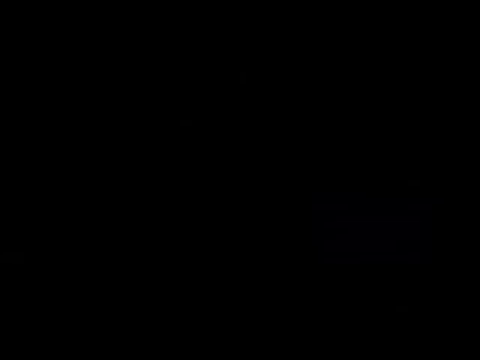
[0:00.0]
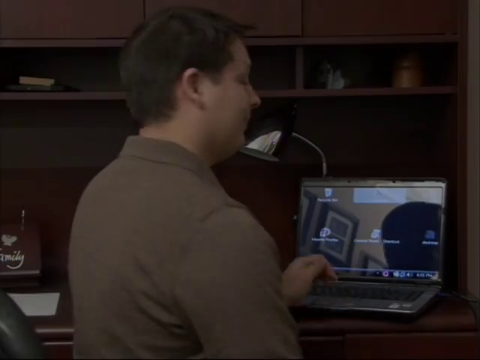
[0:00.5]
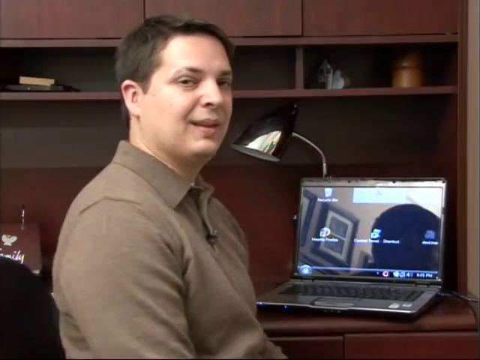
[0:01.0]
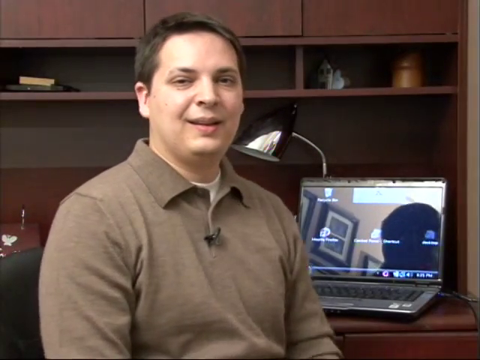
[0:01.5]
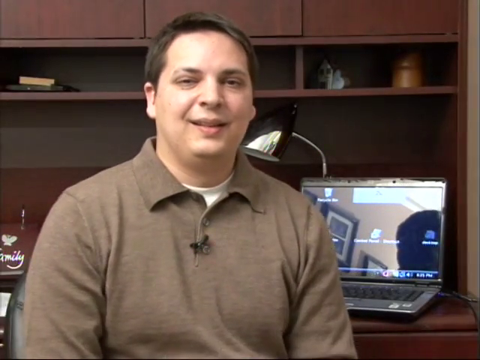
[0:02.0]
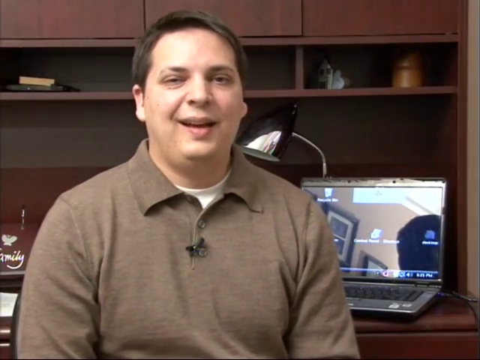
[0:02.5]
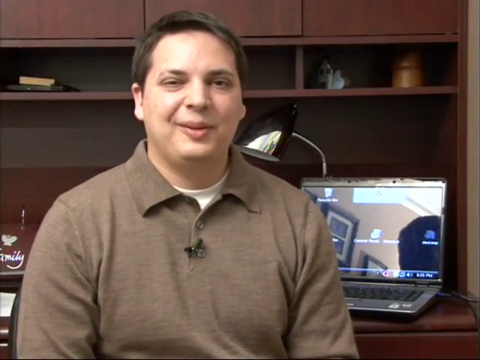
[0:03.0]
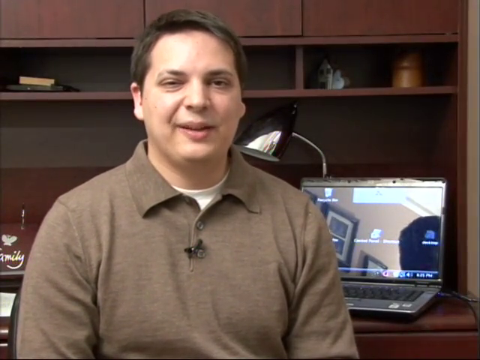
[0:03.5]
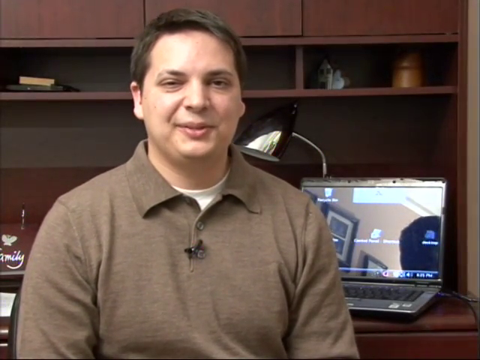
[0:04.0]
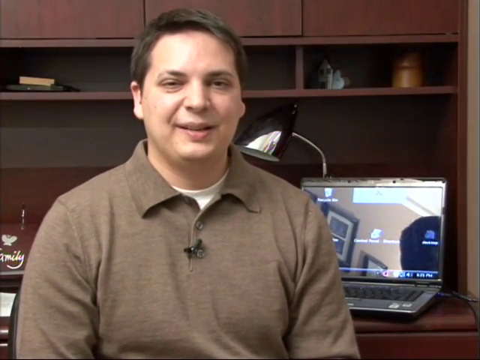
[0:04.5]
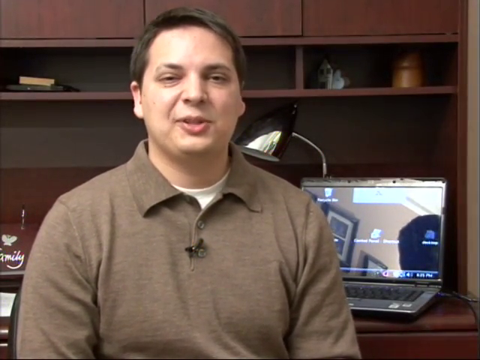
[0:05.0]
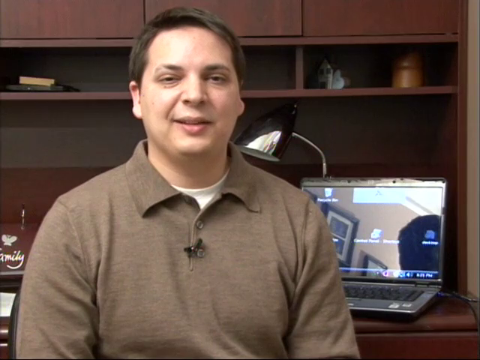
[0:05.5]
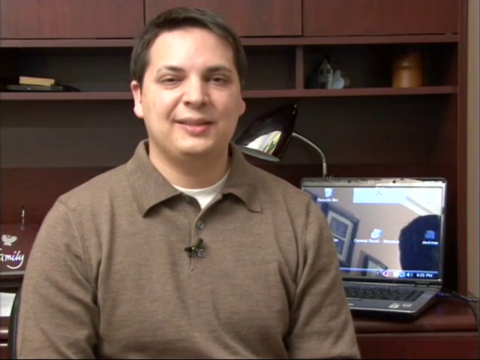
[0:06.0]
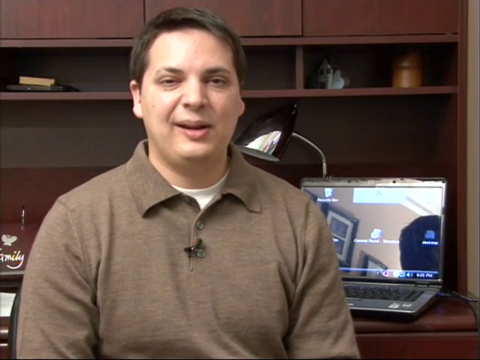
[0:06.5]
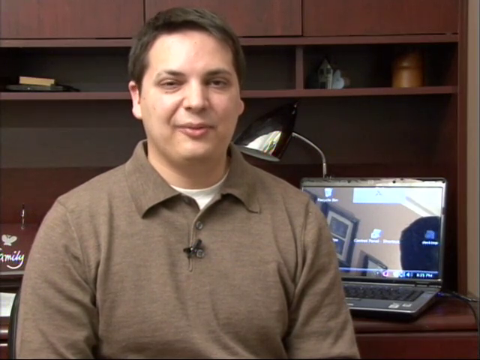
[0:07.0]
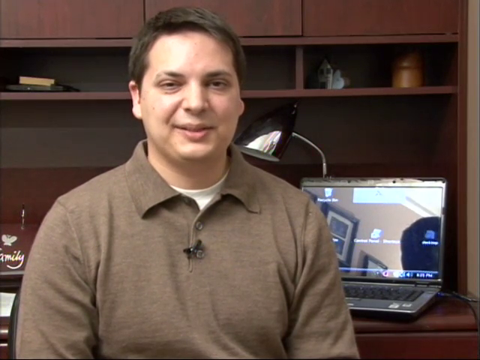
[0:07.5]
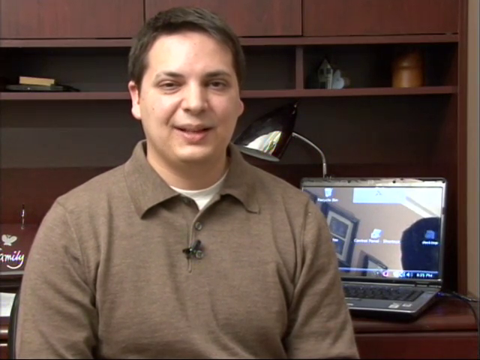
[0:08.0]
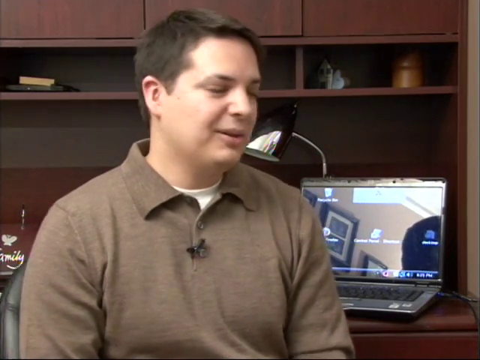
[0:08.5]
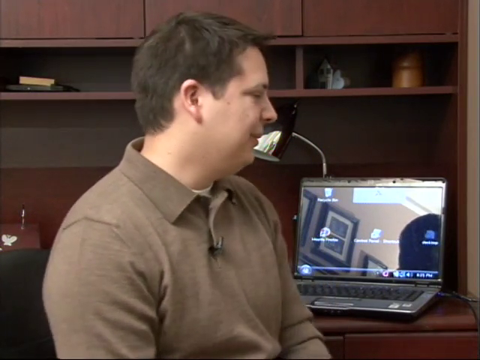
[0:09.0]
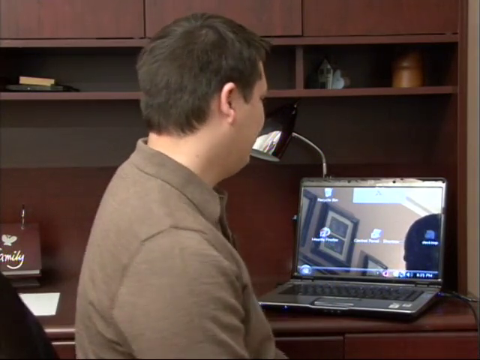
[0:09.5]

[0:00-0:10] The video fades in from black on a young man who looks to be in his early 20s, somewhat heavyset and slightly overweight but not too much, with somewhat of a fat face. He is brunette, with medium-length hair slightly parted over his right side, and wears a light brown or grayish-brown button-down polo-style shirt over a white undershirt. A lapel mic is clipped to the middle of his shirt where the buttons go down. Behind him is a wood-grain computer desk with upper cabinets, a narrow row of shelves above a lamp, and a desk area that houses a laptop off to the right of the young man. He speaks while looking into the camera, then turns to the left toward his computer, and the video fades to black.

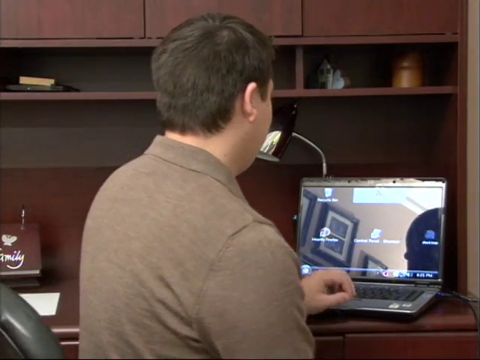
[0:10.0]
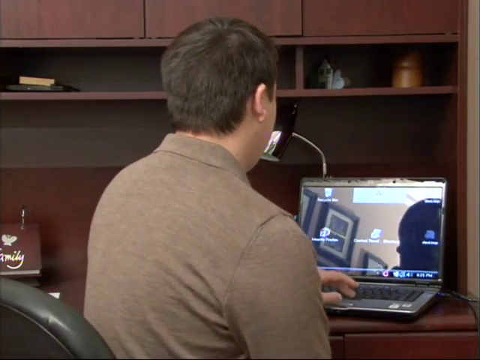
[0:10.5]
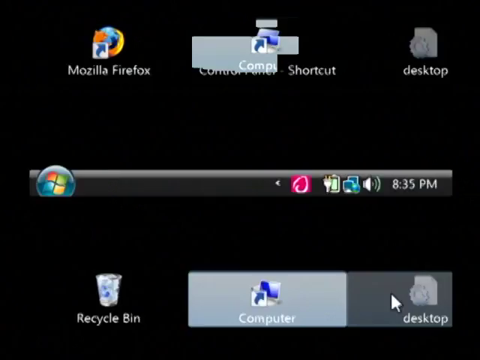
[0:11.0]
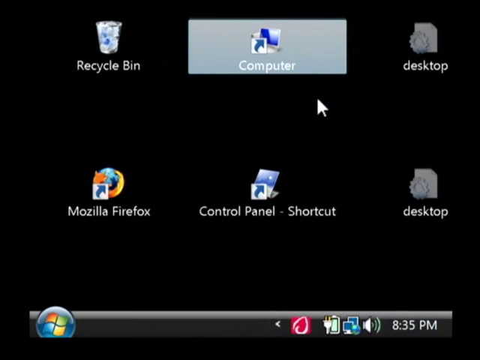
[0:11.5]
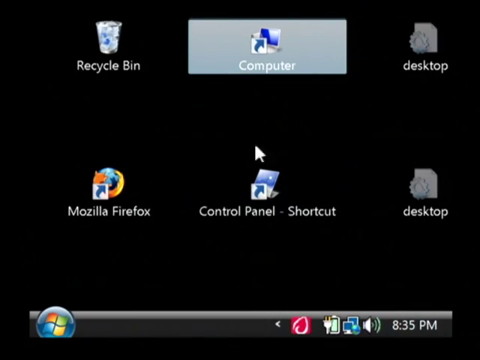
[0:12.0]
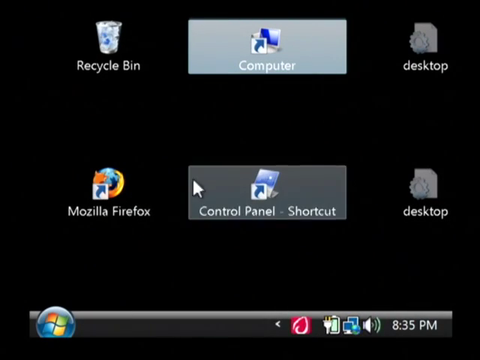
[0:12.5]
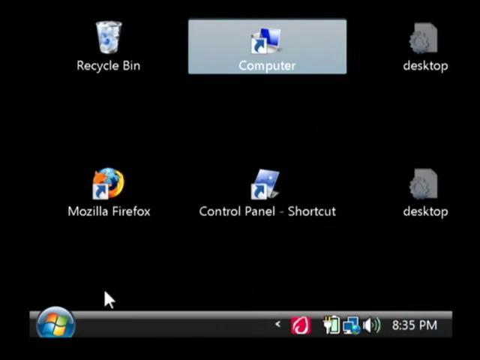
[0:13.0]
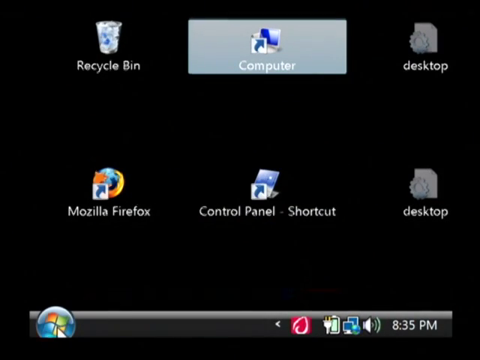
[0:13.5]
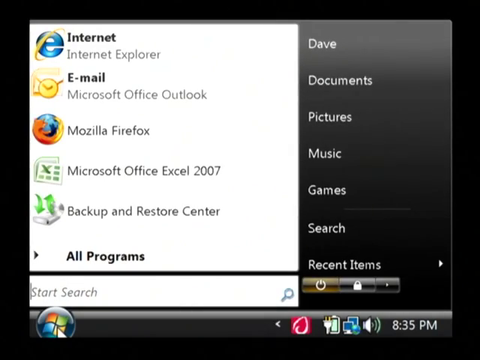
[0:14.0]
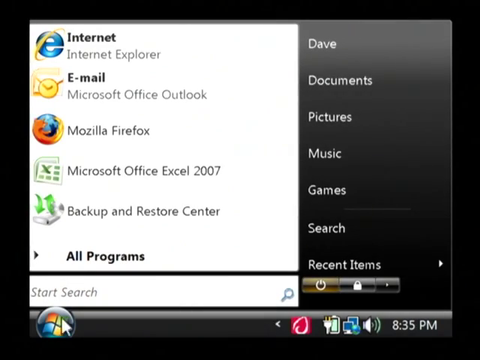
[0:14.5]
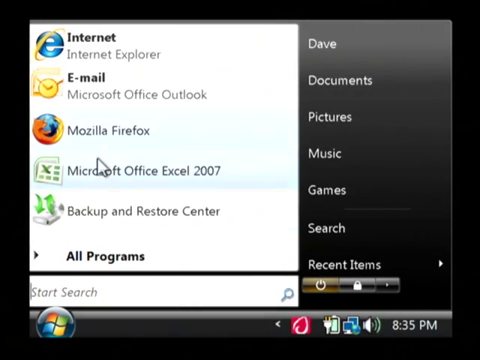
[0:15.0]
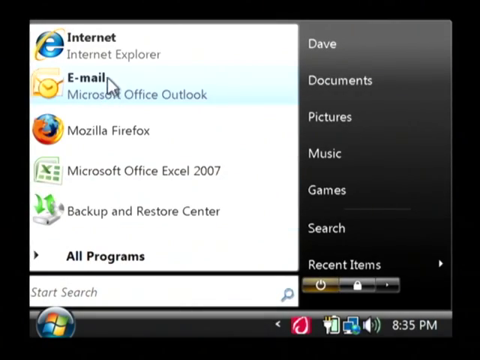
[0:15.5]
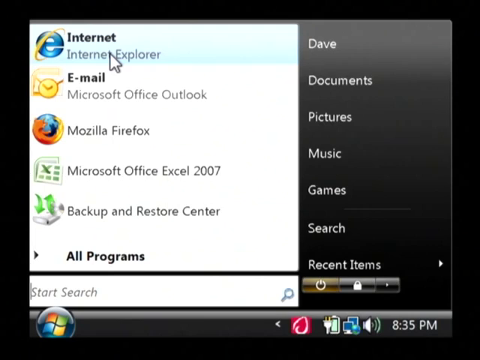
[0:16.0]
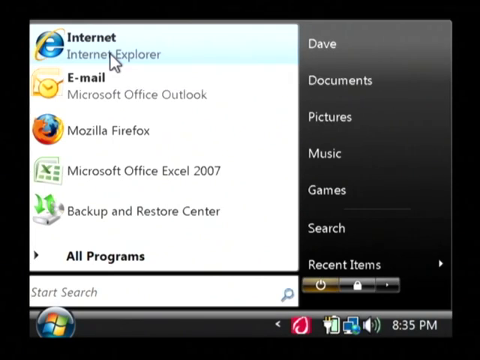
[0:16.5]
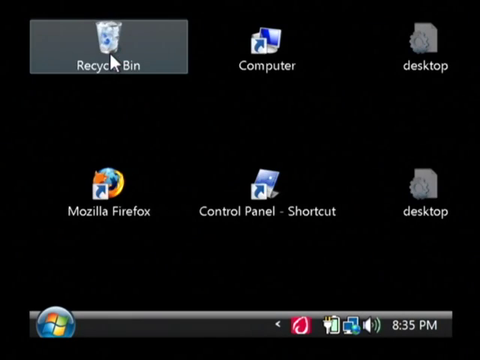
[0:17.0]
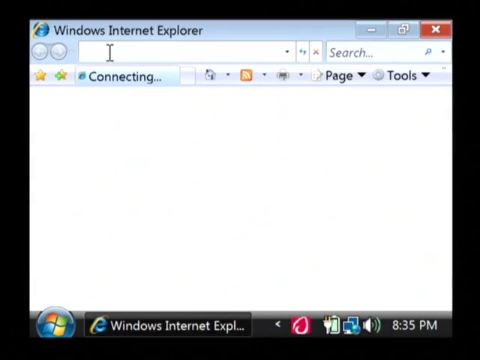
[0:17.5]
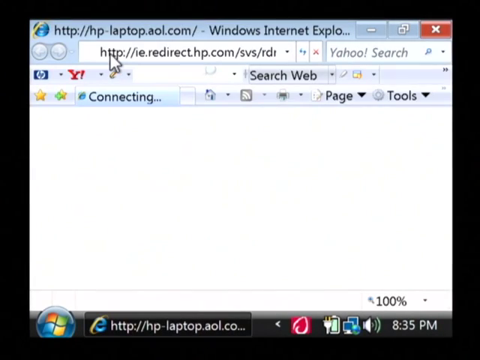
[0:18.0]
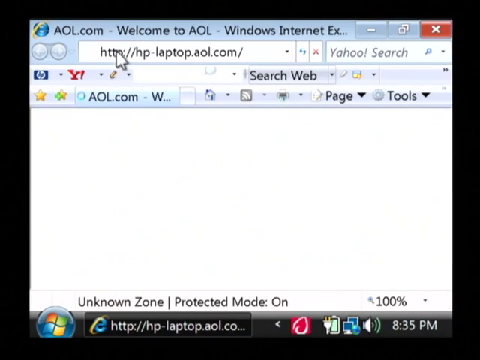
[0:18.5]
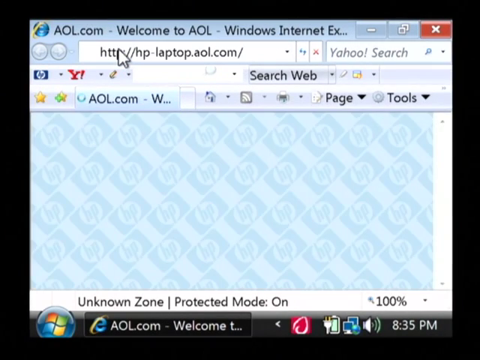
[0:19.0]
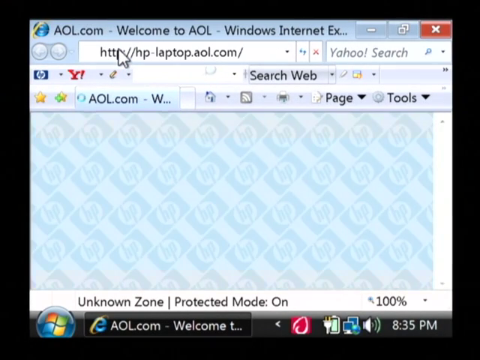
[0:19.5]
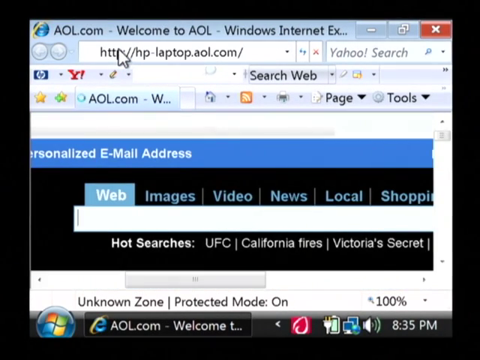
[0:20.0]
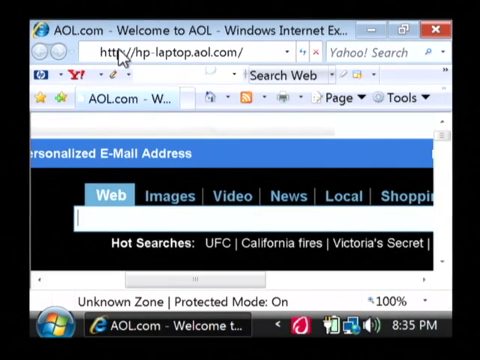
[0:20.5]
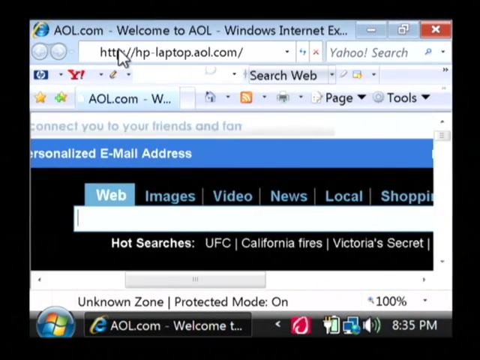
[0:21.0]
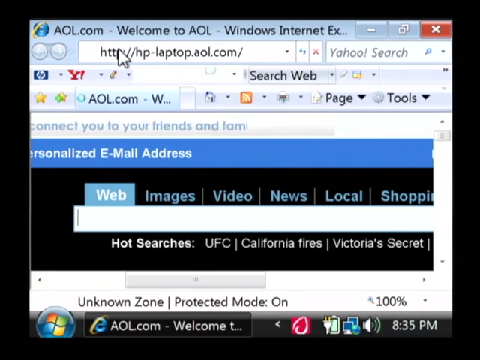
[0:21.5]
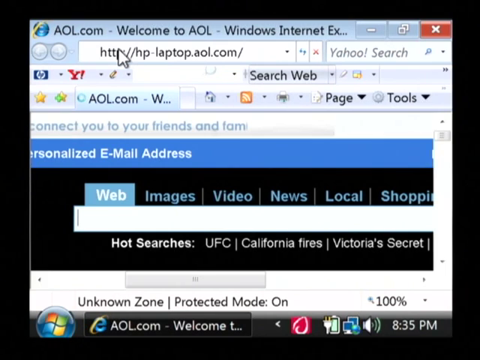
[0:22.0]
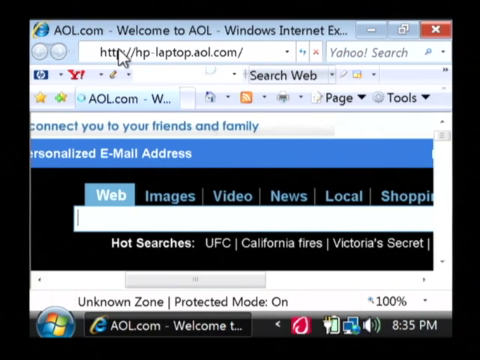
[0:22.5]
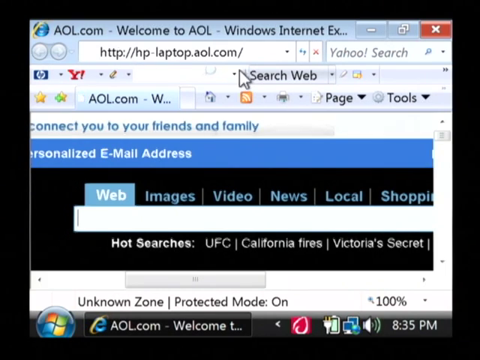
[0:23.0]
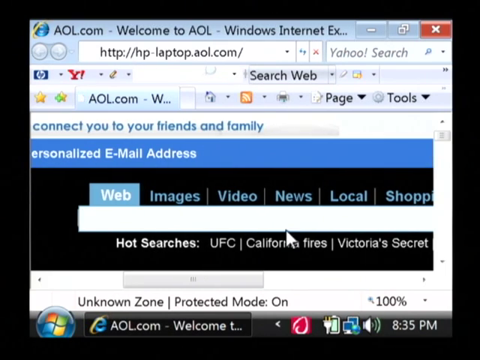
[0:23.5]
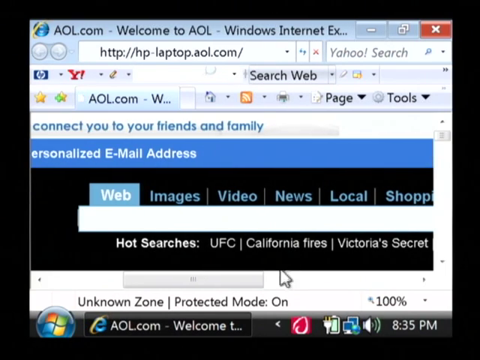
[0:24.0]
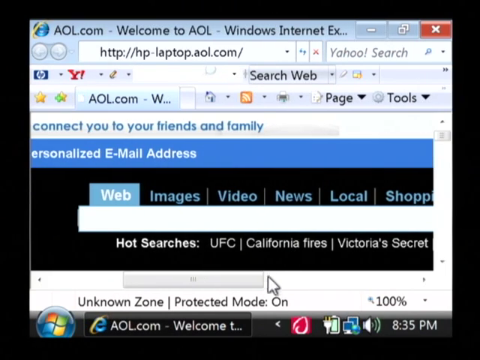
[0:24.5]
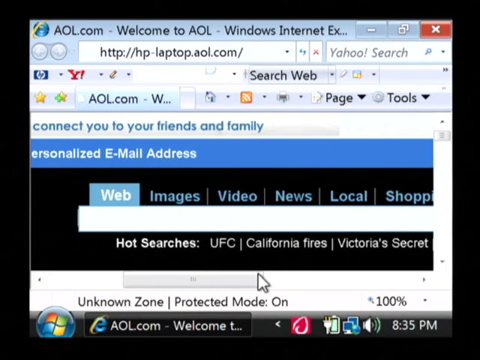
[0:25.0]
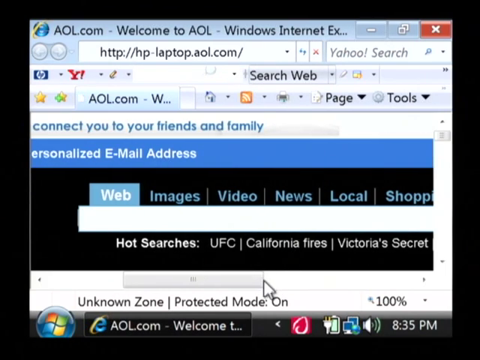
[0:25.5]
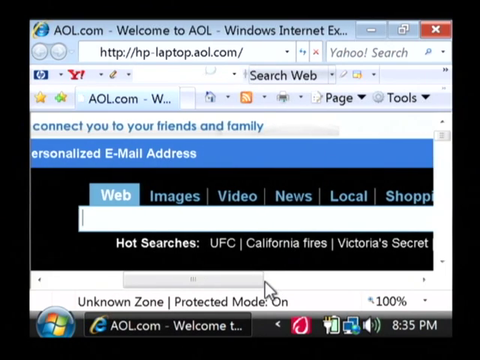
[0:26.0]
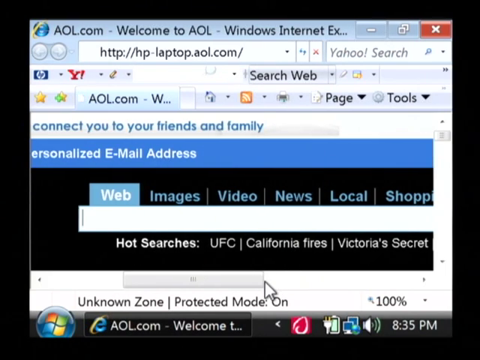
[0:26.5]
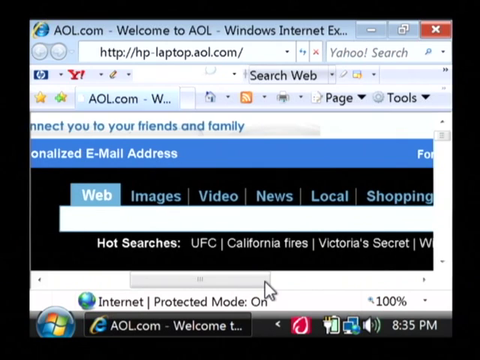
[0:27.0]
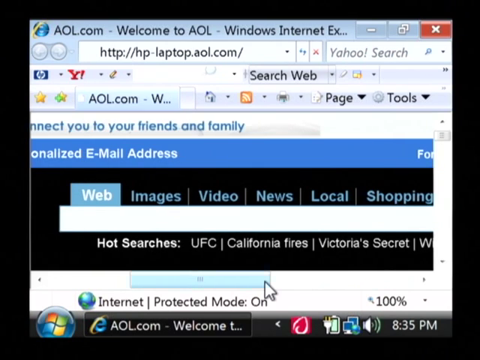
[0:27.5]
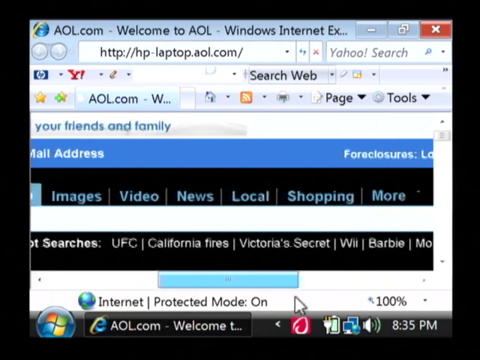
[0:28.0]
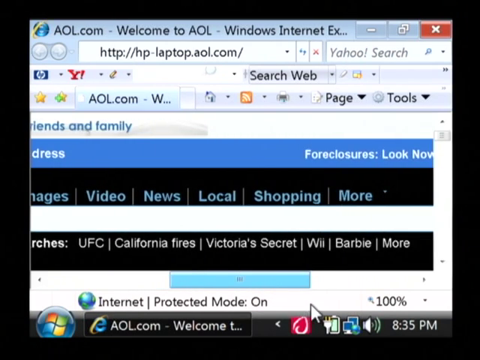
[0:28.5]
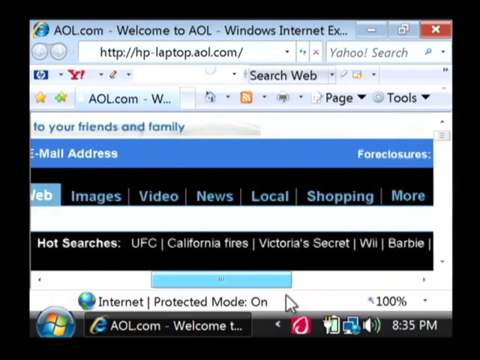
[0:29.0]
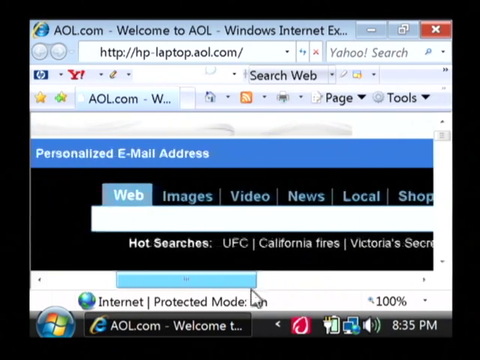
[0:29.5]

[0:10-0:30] The young man is turned toward his laptop, and the view switches to the computer screen. From the start menu he clicks on Internet Explorer, and from there he clicks on AOL. He appears to move or scroll sideways on a window. The computer appears to be an earlier Windows model, maybe from 2007. Programs available on the computer include Internet Explorer, Microsoft Office Outlook, Firefox, Microsoft Office Excel 2007, and Backup and Restore Center. The user uses Internet Explorer to click on AOL.com. Other icons at the top of the window include HP Printing and Yahoo, among others. The partially open AOL window appears to facilitate creating a personalized email address. The AOL interface shows menus including web, images, video, news, local, and shopping, and below them are hot searches, three of which appear to be UFC, California Fires, and Victoria's Secret.